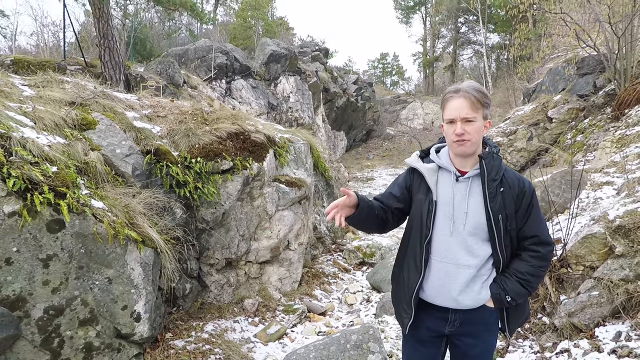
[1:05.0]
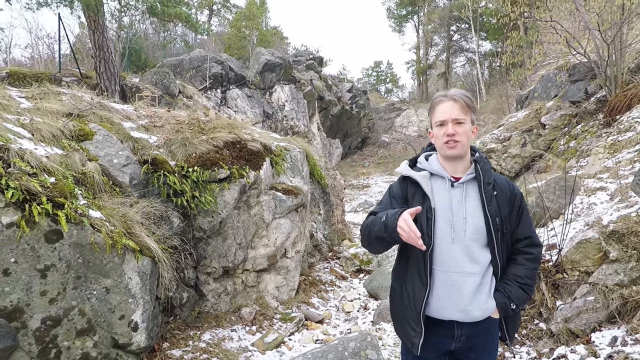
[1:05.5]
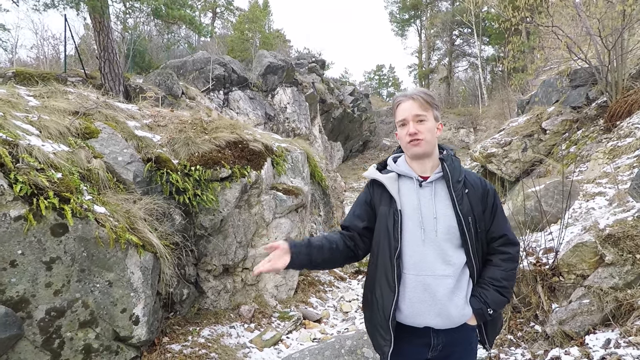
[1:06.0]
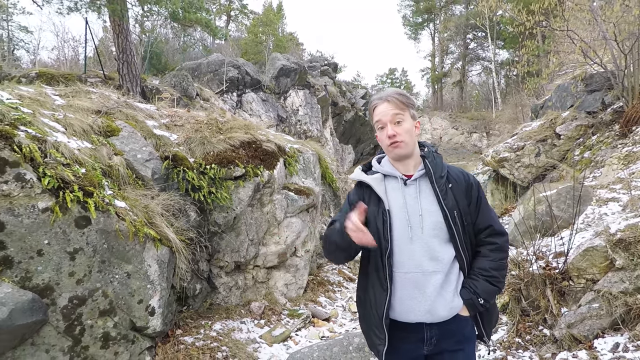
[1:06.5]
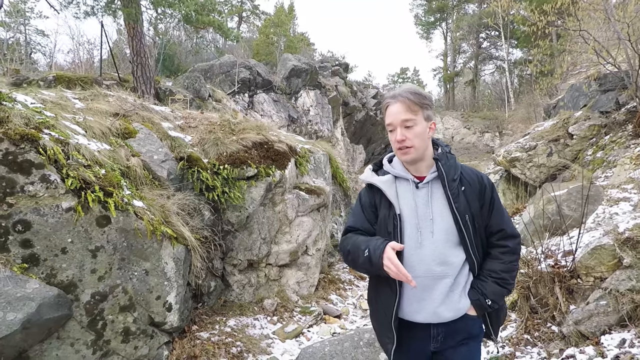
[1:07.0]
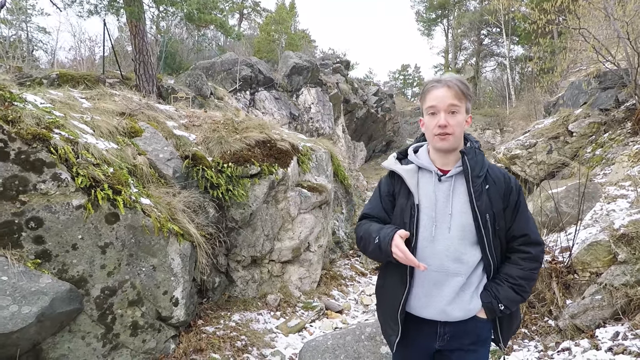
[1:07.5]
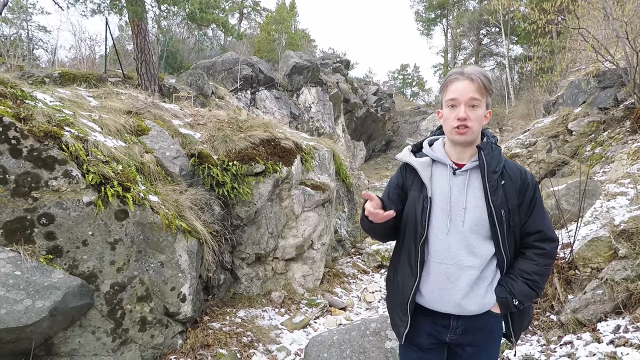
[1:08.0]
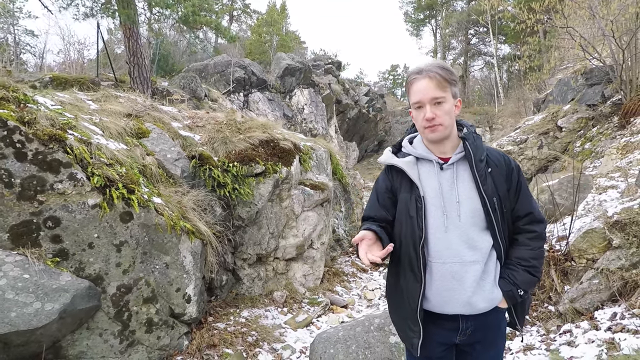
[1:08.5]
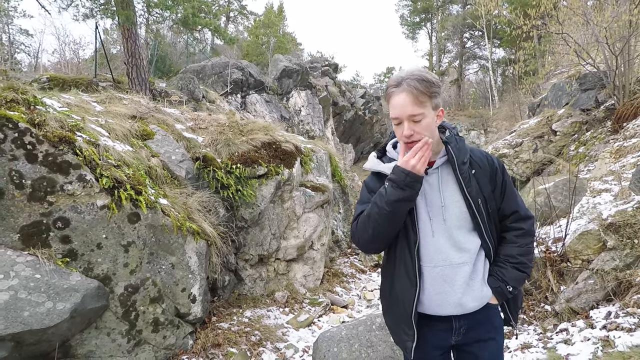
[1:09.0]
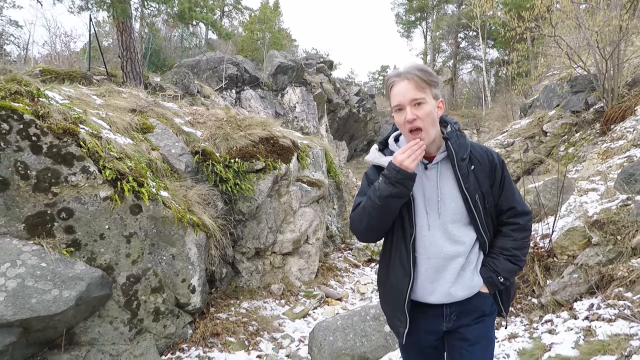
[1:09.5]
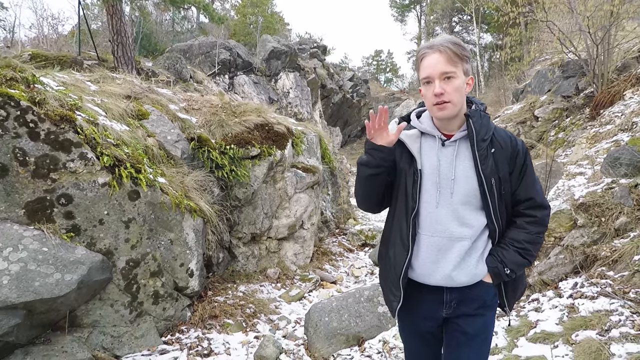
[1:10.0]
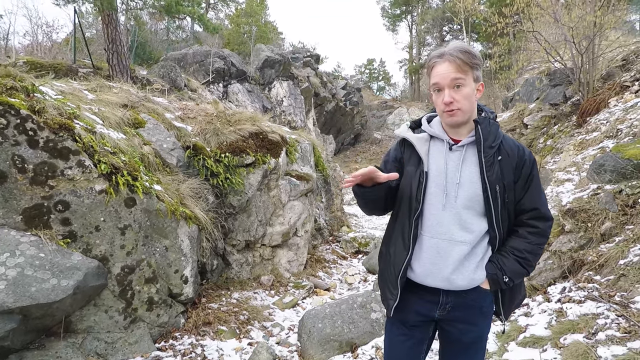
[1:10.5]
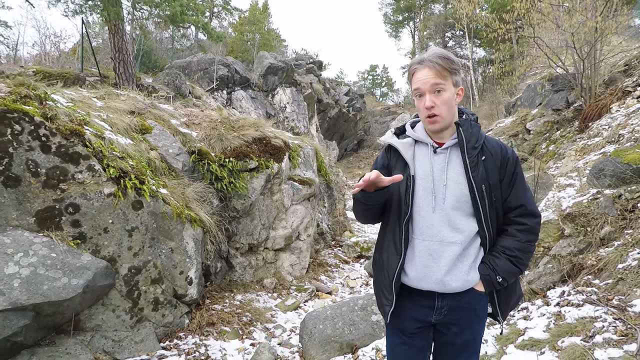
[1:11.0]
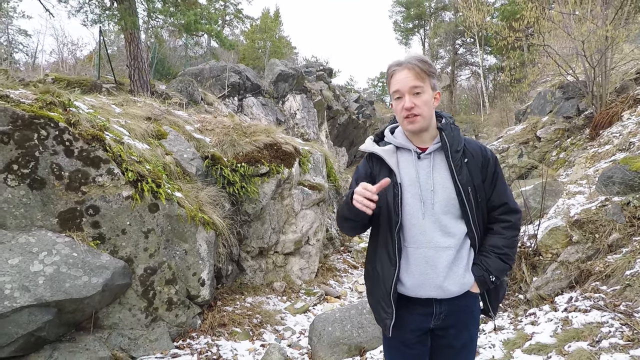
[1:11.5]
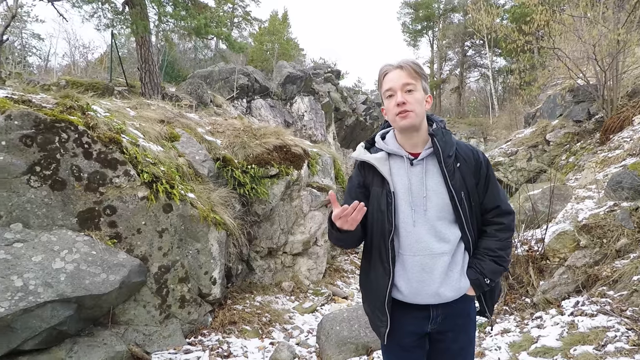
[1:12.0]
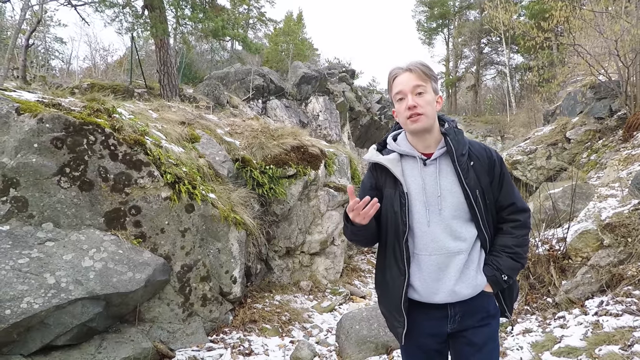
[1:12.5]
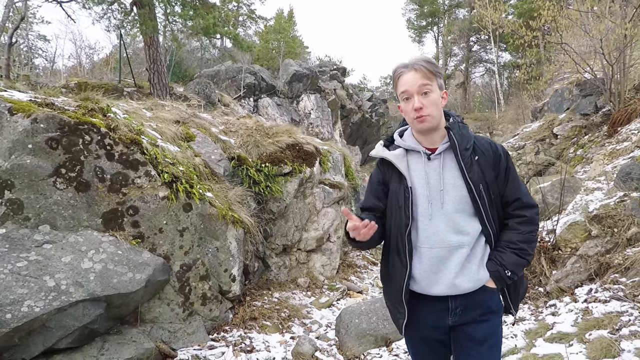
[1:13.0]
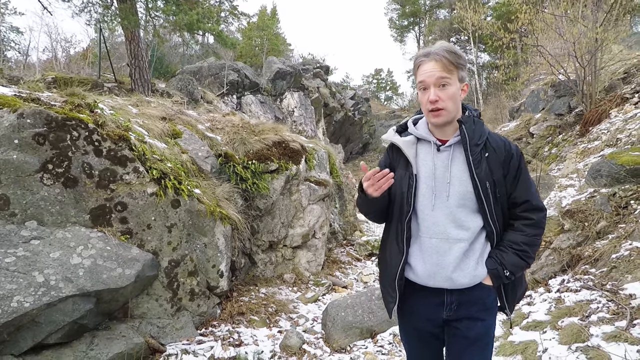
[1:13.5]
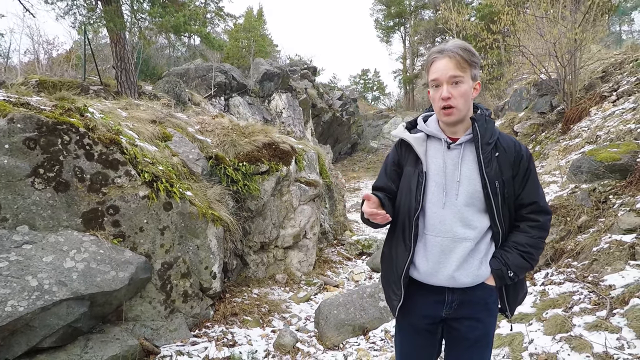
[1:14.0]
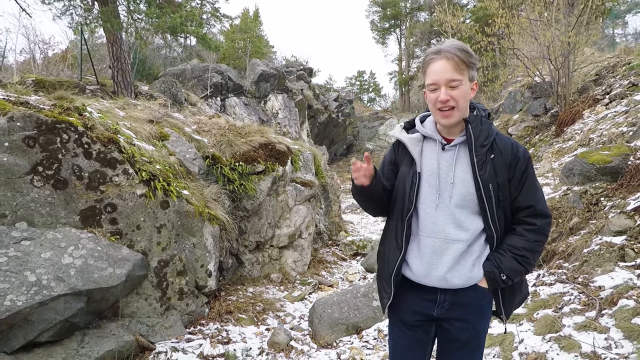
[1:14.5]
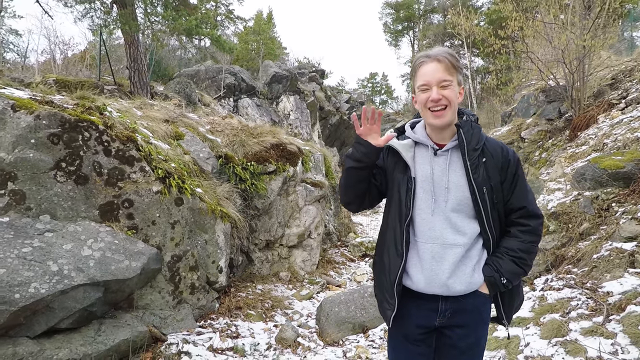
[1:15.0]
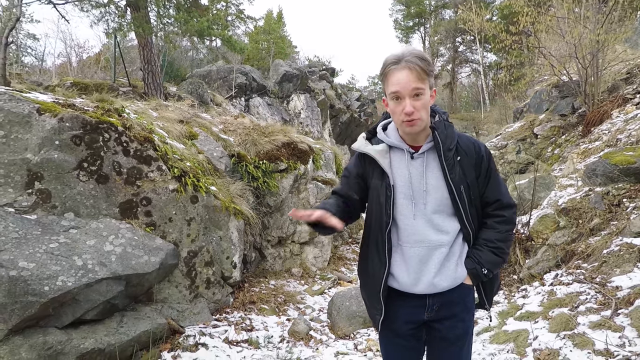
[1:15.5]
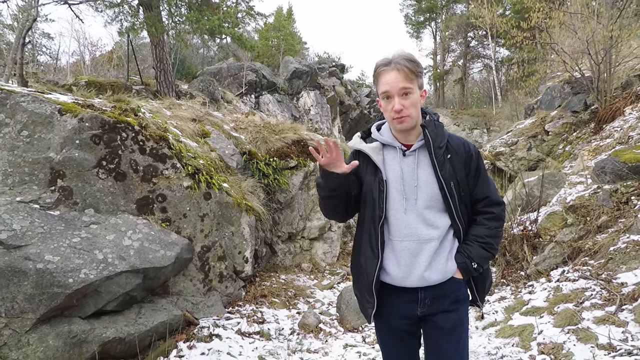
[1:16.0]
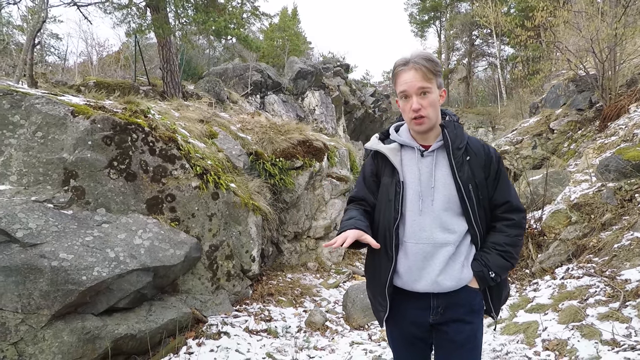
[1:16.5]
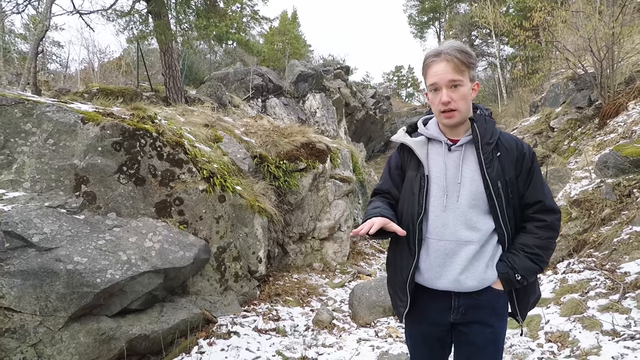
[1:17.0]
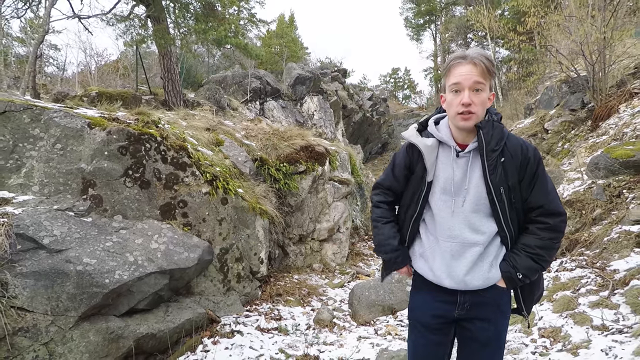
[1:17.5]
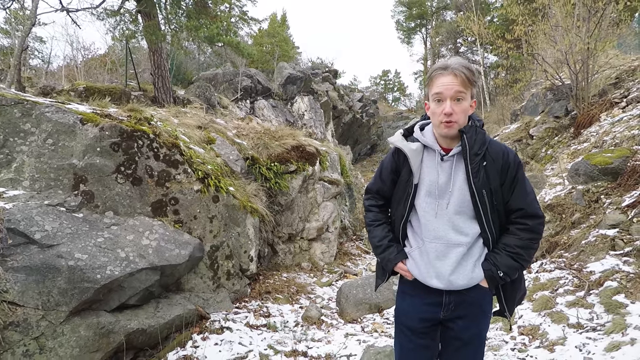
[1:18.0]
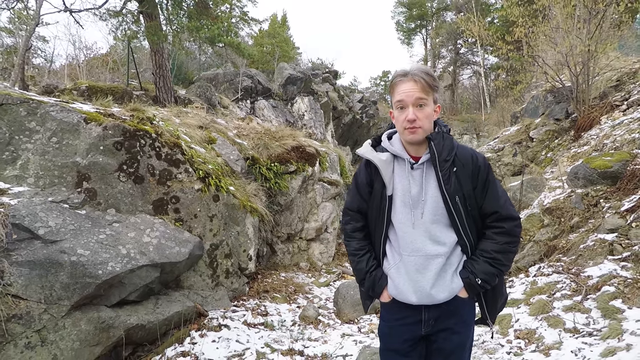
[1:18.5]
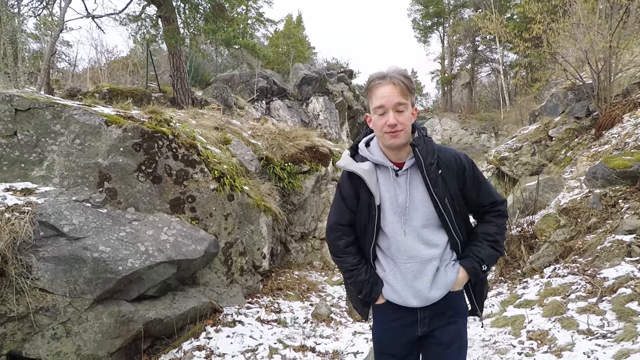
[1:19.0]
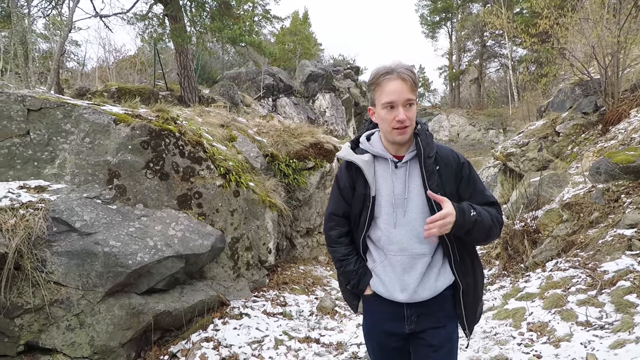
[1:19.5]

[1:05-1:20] The video is called One Town, Four Elements, Yitterbee, titled Things You Might Not Know. The man in the winter jacket gestures with his hands as he talks, looking as though he is describing something unbelievable and acting really surprised. Behind him is a snow-covered area by the woods with lots of rock formations that look monolithic and have algae growing on them. There is lots of snow on the ground, and some pine trees and trees without leaves are in the distance. It is not really overgrown; there is a lot of nature around him but no structures, houses or animals. He is not visible much below his thighs. He looks very pale, wipes his face with his hands a lot and makes grimacing faces as if explaining something crazy.